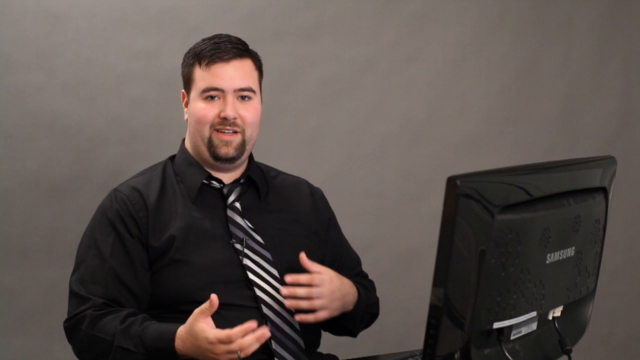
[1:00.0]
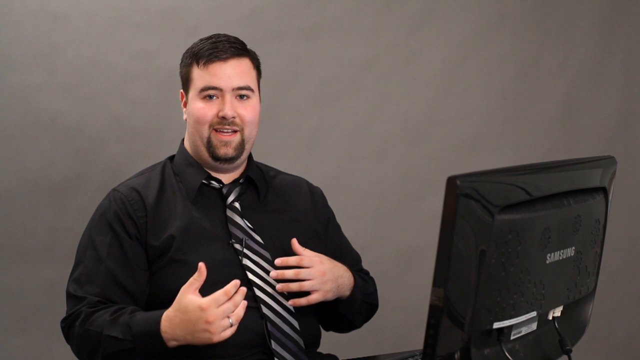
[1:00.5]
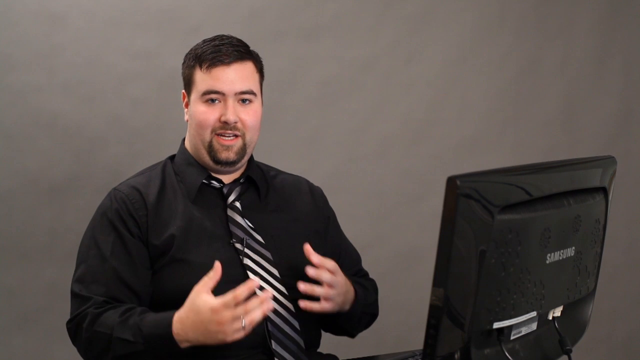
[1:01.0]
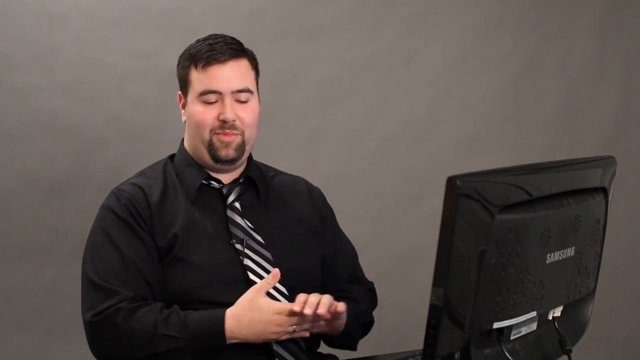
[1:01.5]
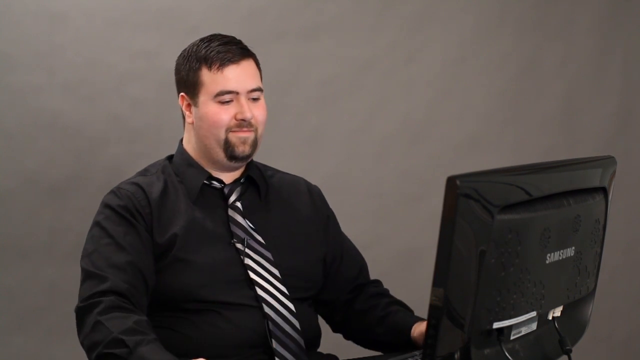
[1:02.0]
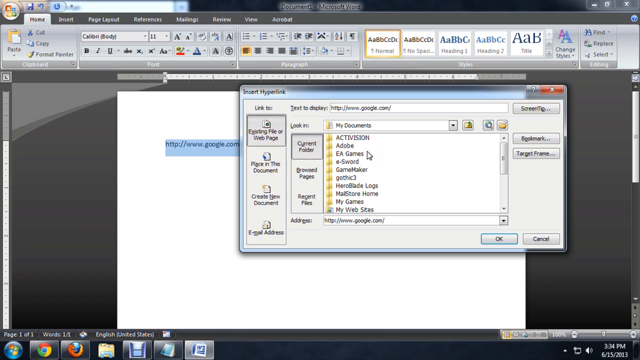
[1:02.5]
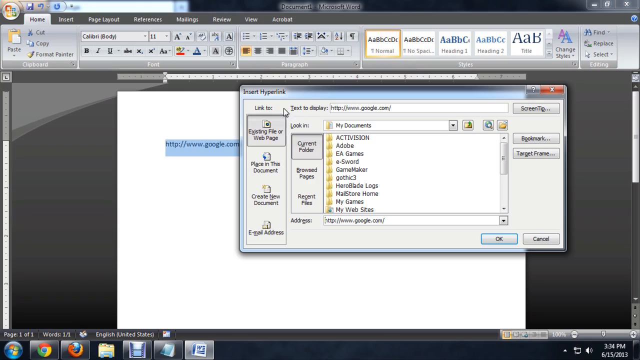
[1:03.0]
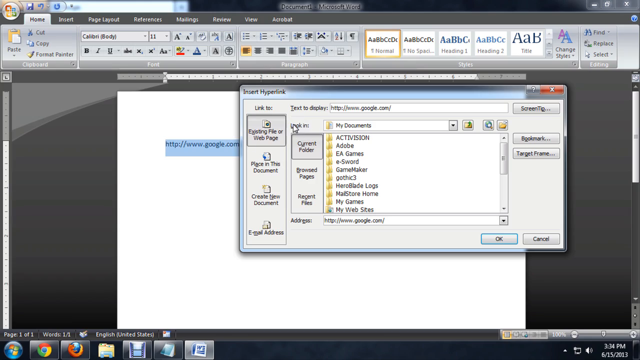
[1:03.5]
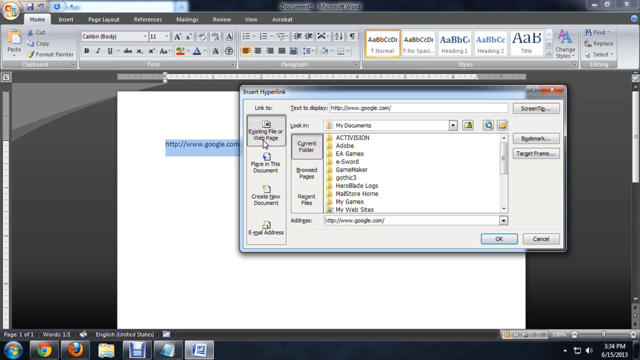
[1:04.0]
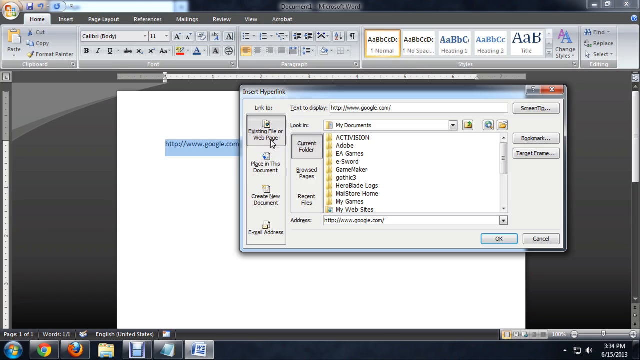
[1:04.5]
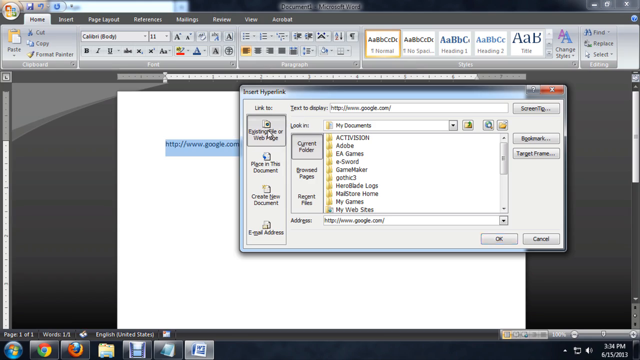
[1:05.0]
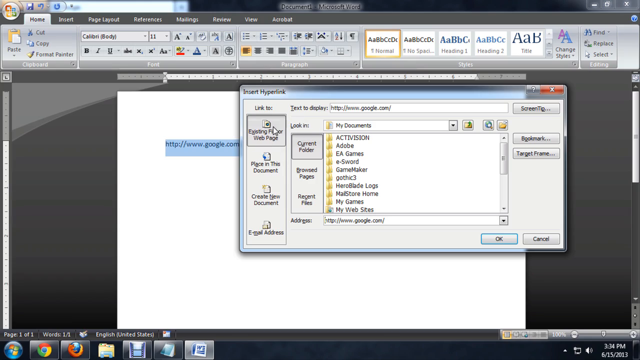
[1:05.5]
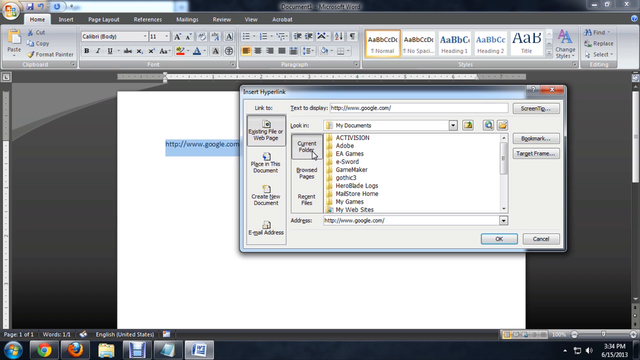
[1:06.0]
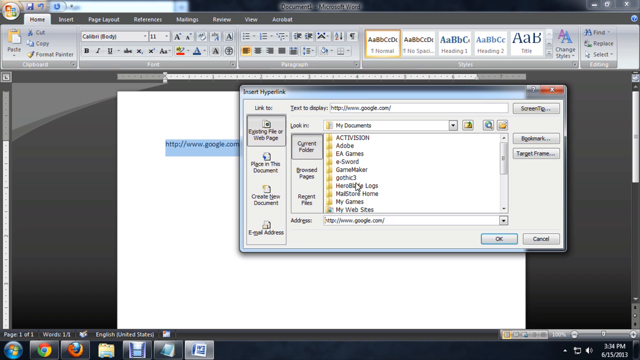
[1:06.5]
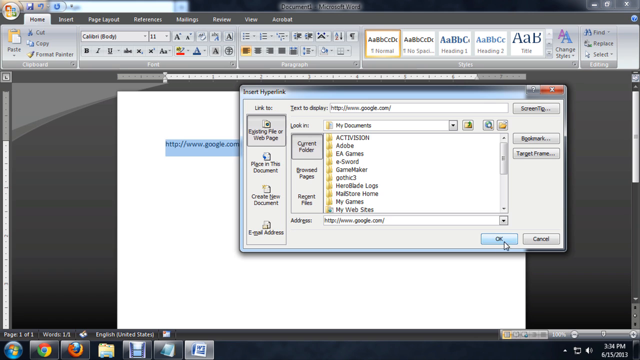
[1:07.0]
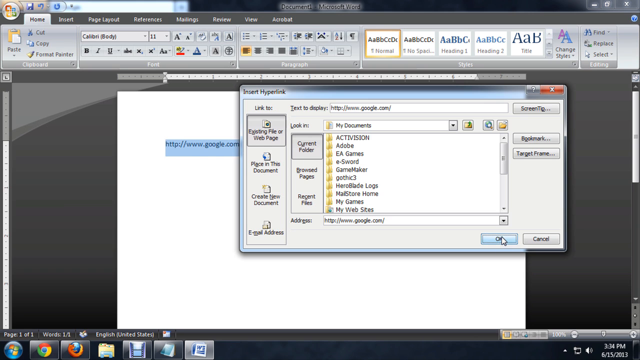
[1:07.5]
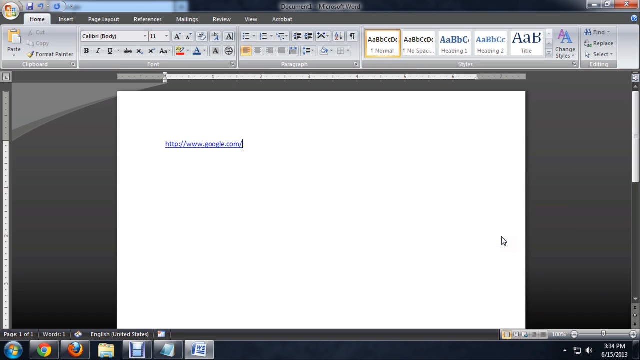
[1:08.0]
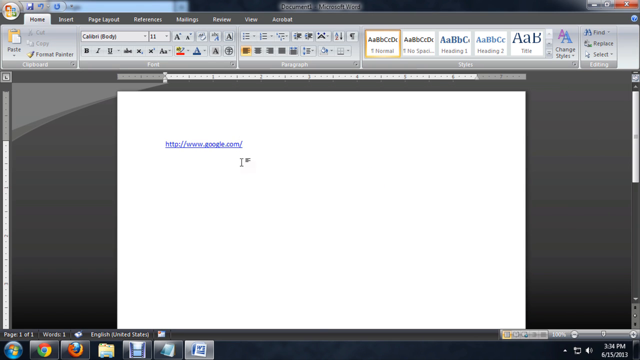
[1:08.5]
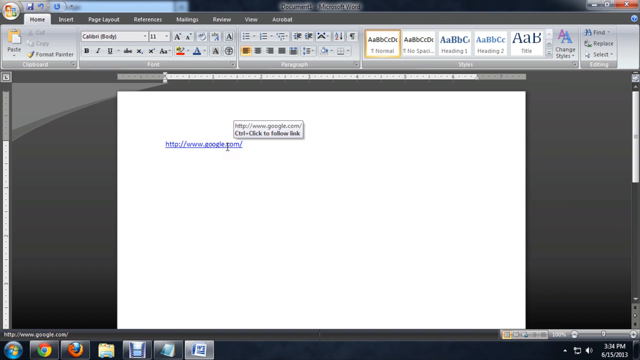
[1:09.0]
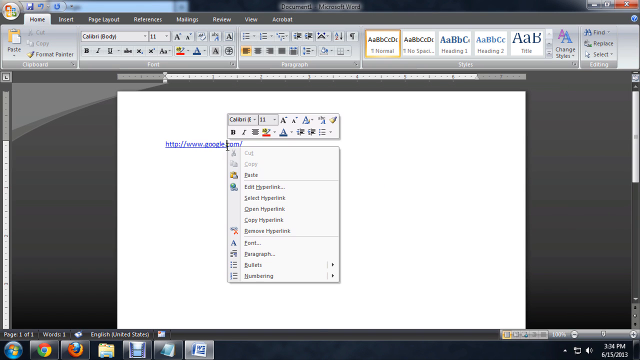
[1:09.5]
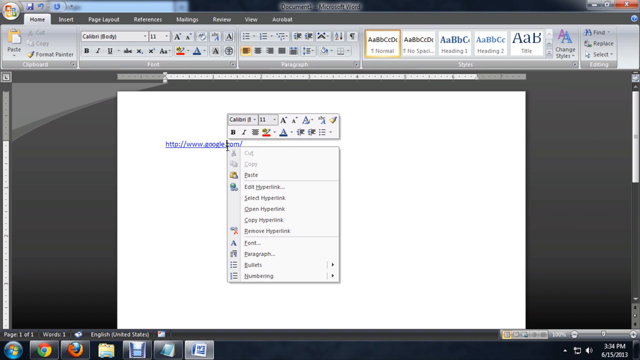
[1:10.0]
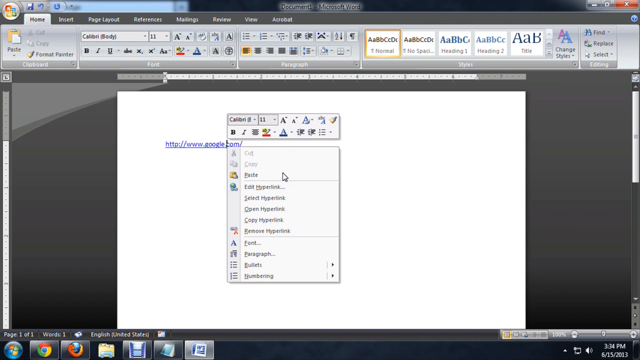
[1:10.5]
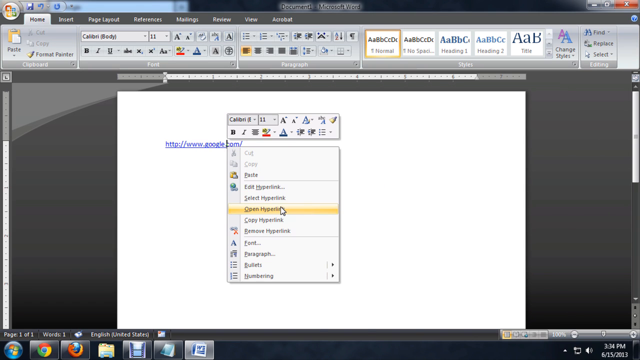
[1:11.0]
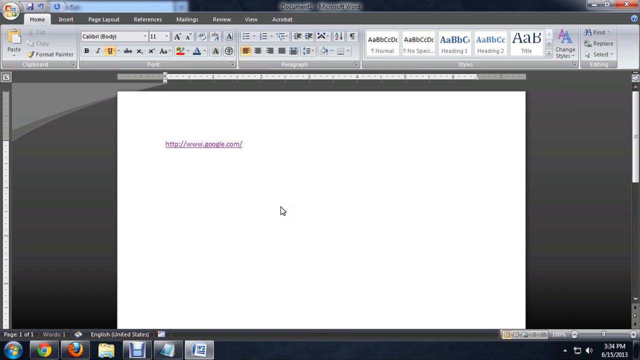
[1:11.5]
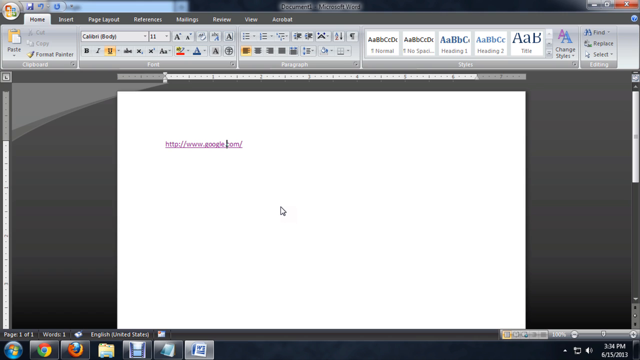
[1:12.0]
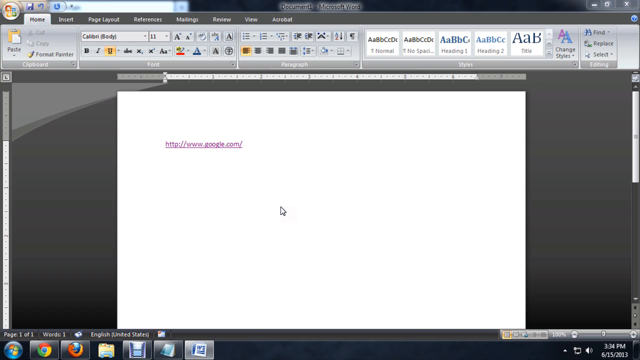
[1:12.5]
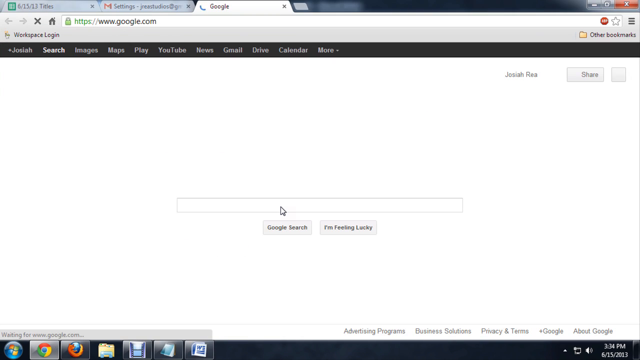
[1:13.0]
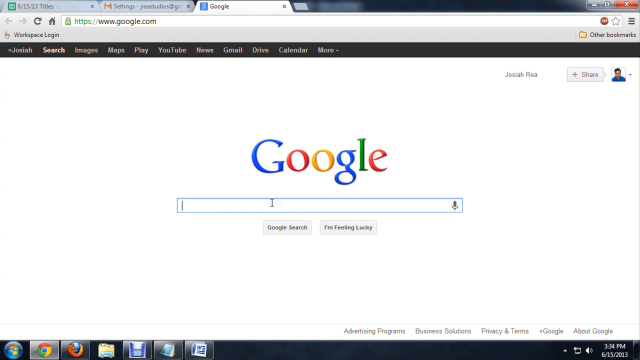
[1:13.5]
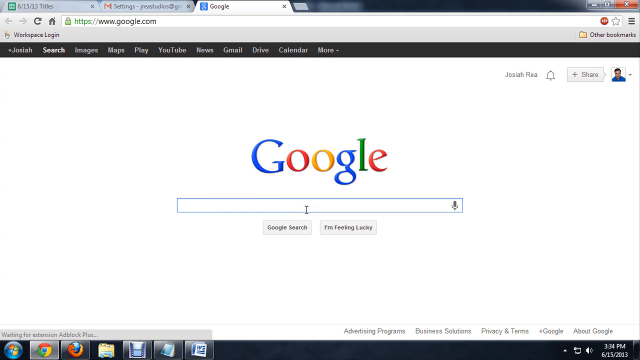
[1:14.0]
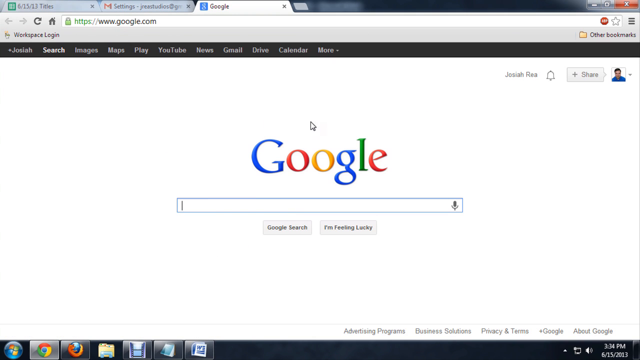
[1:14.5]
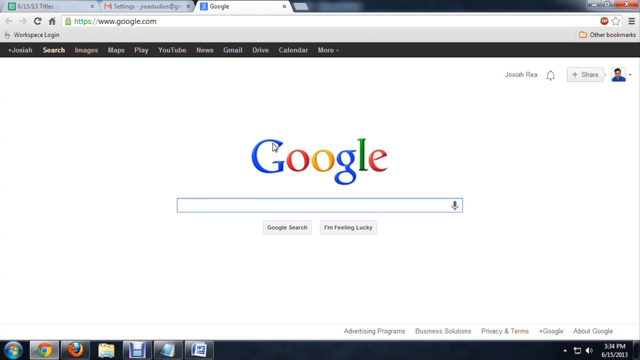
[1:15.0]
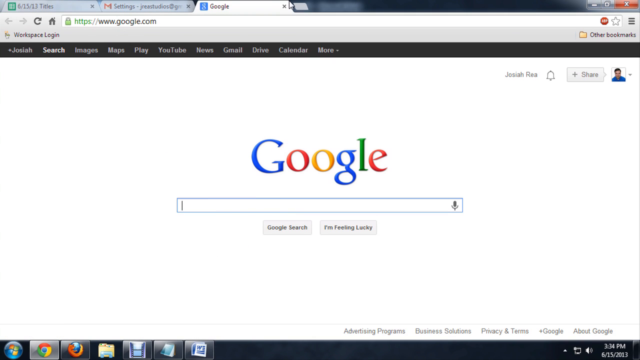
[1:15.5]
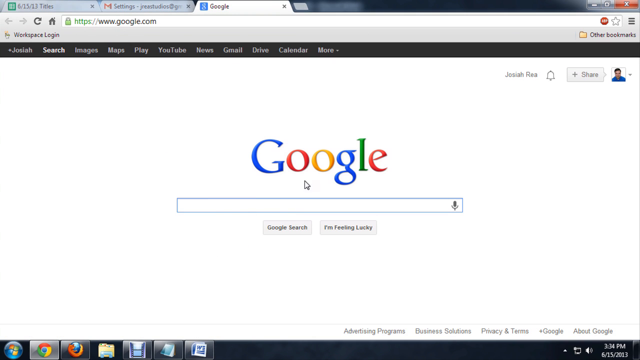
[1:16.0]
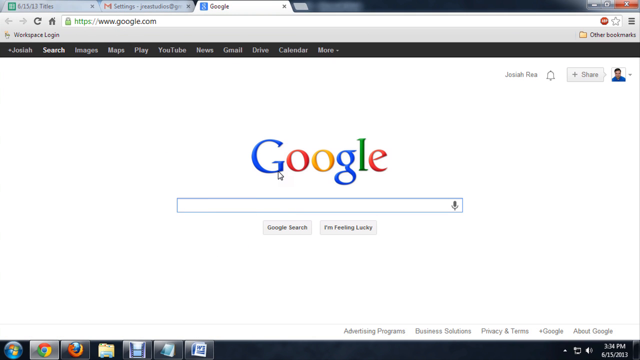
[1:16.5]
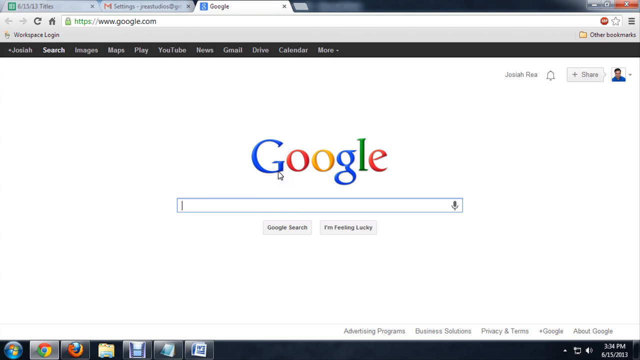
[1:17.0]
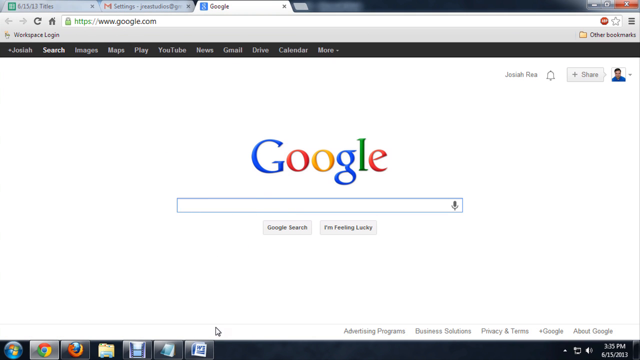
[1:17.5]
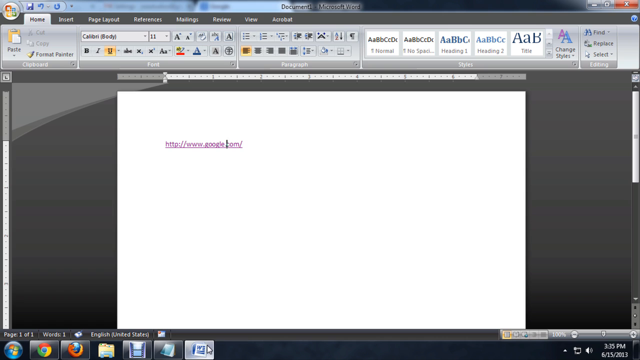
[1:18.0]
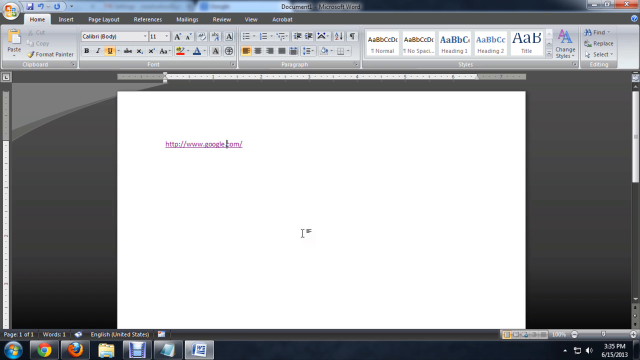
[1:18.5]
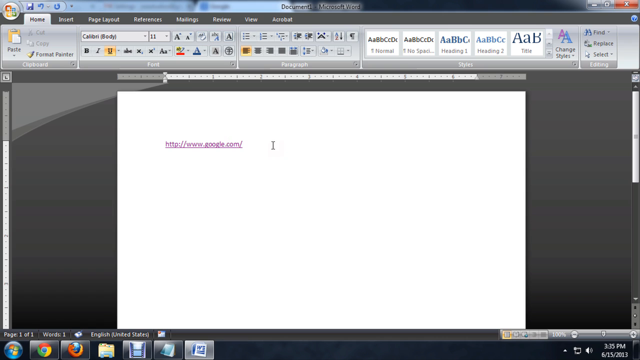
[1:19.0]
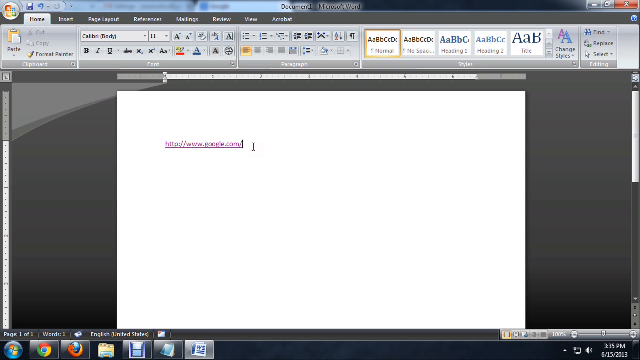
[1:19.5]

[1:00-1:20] Josiah talks to the camera for a second with brief hand gestures. He moves both hands to touch each other before moving them toward the computer screen and looking back at it. The video cuts back to the Word document with the Insert Hyperlink tab open. He moves the mouse to the "link to existing file or web page" section and circles it, then moves to "current folder" to the right, and then down to the OK button at the bottom right of the tab. He clicks OK and moves the mouse back to the hyperlink in the Word document, right-clicks it, and clicks Open Hyperlink. A Google tab opens in the Google application on his computer, and he circles the Google logo in the middle of the screen with the mouse. He moves the cursor up to the Google tab at the top and hovers over the little X symbol beside the tab, then moves it back down to the Google logo. He drags the mouse down to the bottom of the screen, clicks the Word document, and hovers the cursor over the Google link.